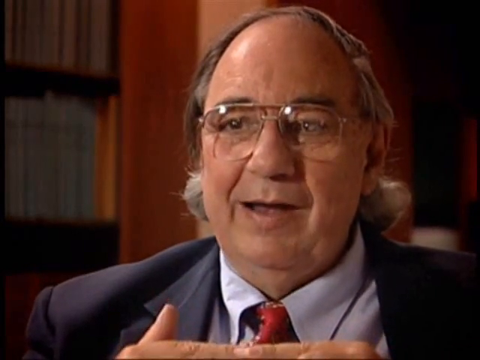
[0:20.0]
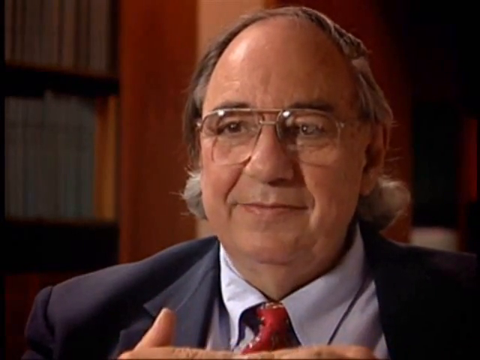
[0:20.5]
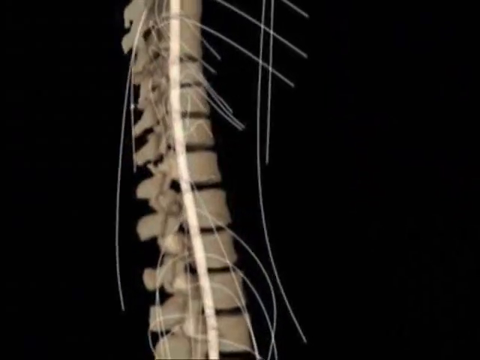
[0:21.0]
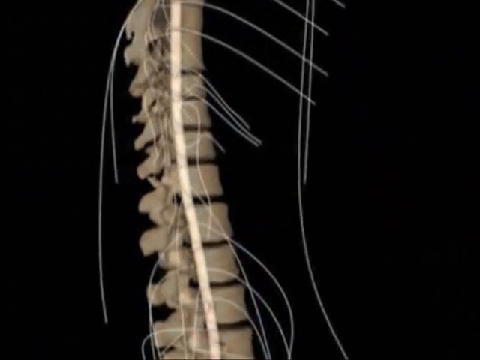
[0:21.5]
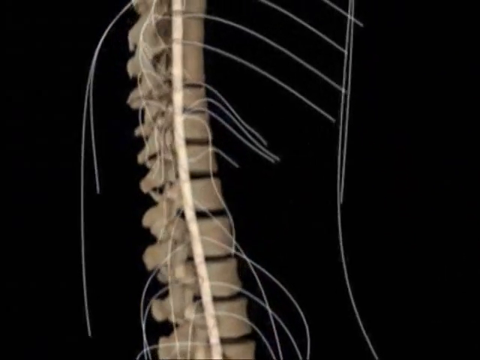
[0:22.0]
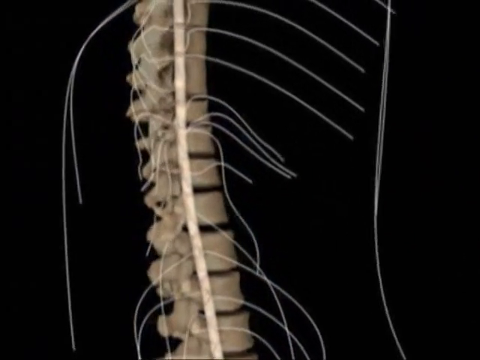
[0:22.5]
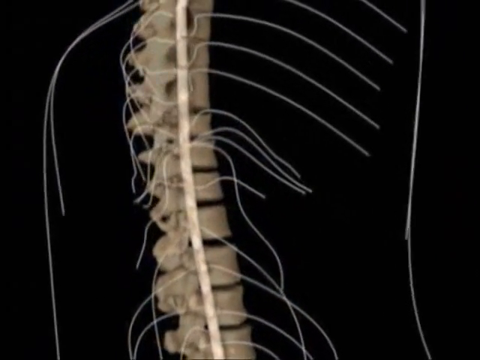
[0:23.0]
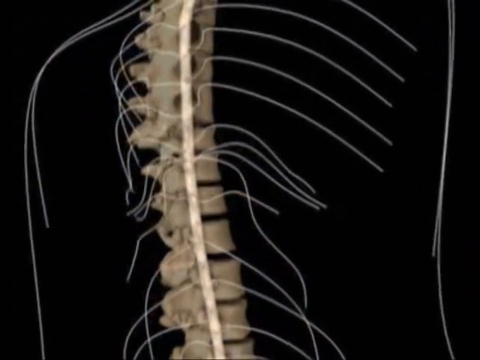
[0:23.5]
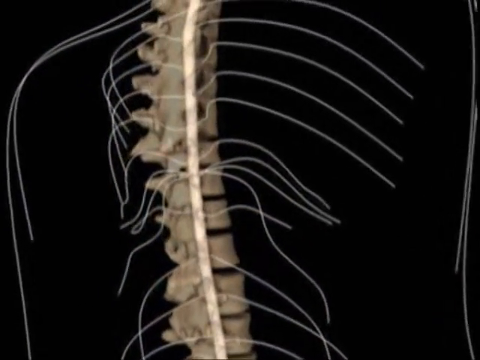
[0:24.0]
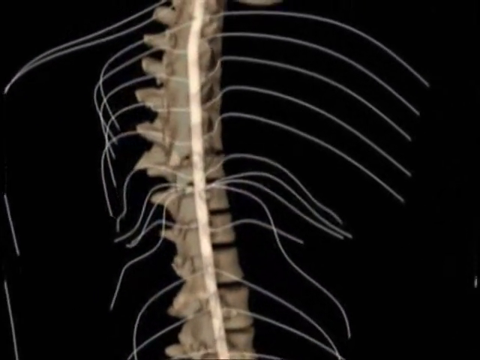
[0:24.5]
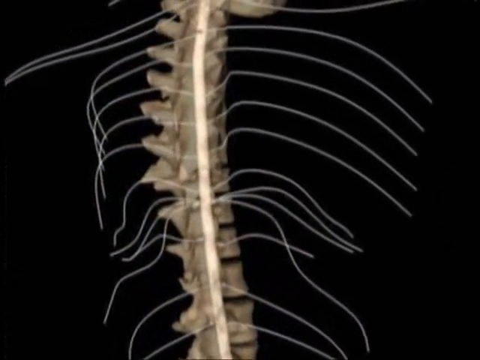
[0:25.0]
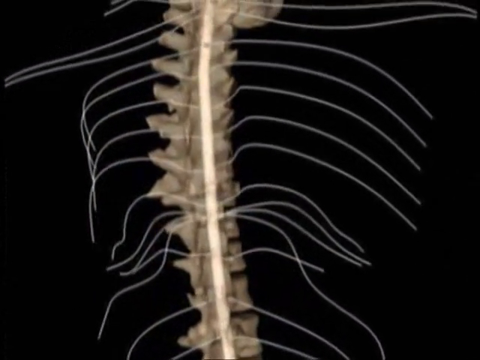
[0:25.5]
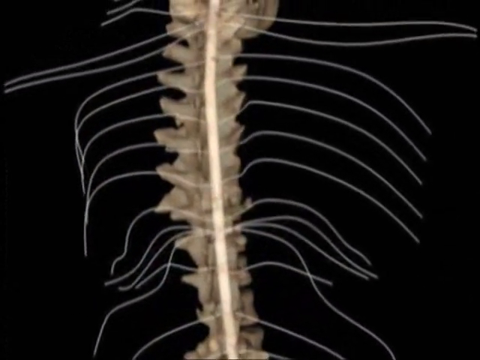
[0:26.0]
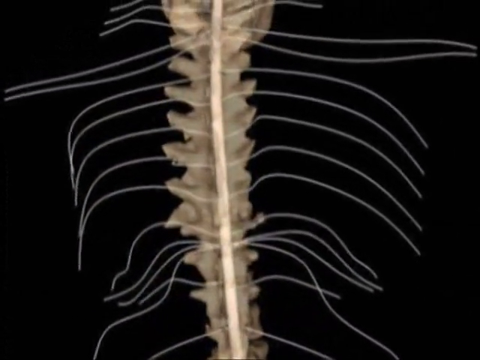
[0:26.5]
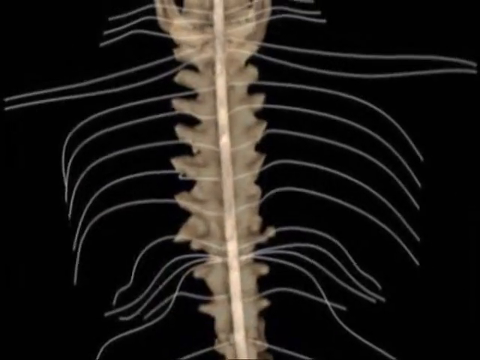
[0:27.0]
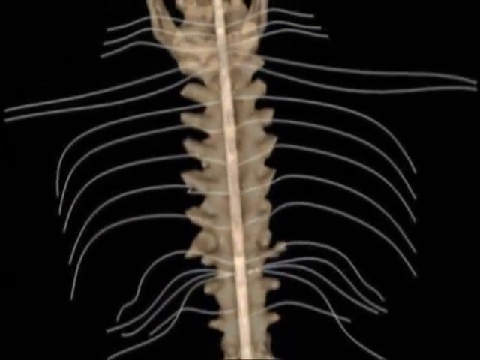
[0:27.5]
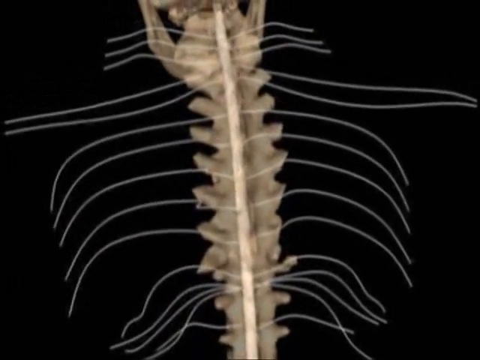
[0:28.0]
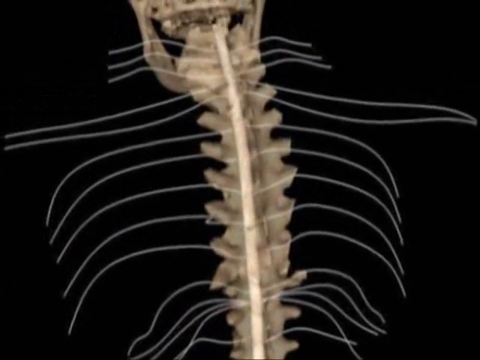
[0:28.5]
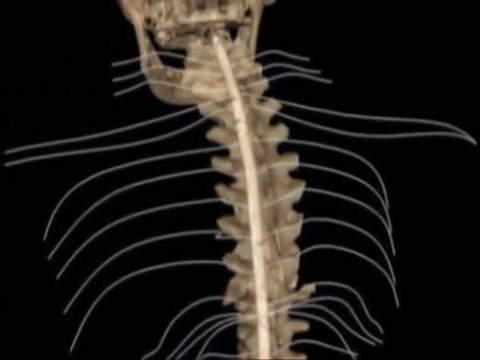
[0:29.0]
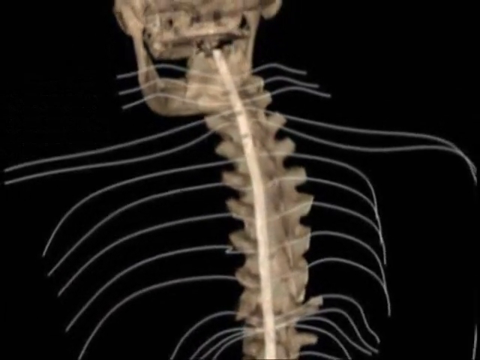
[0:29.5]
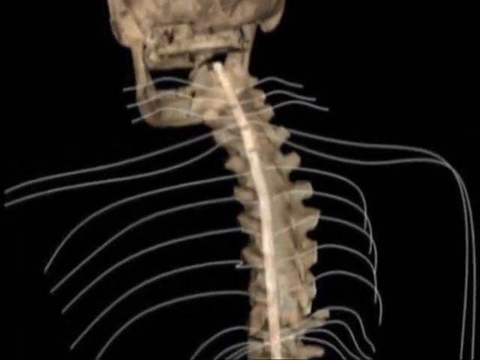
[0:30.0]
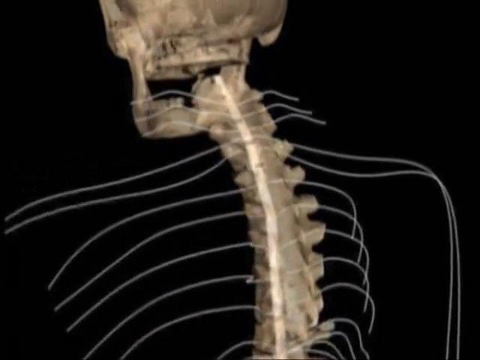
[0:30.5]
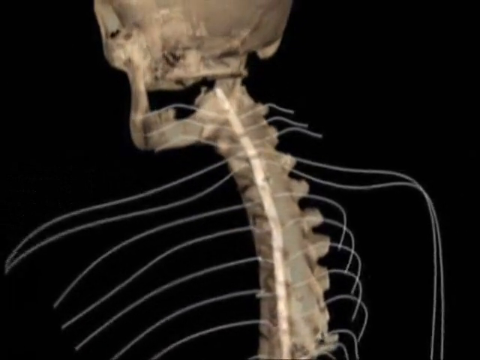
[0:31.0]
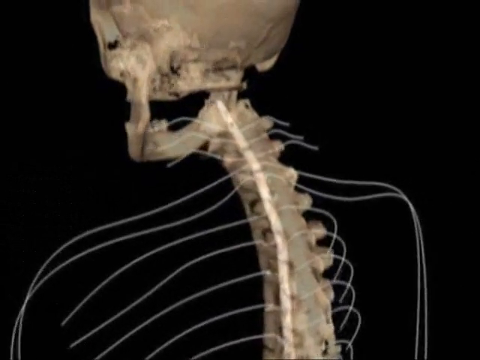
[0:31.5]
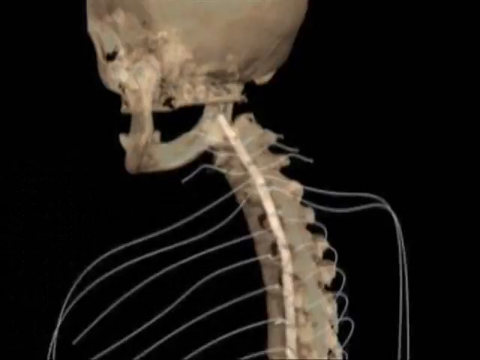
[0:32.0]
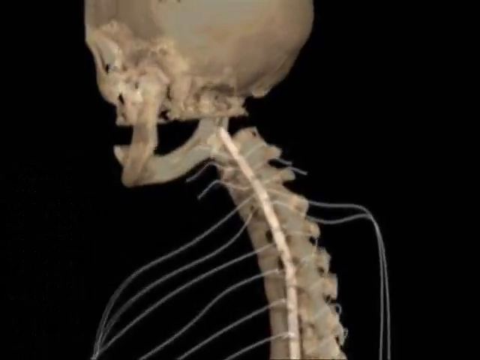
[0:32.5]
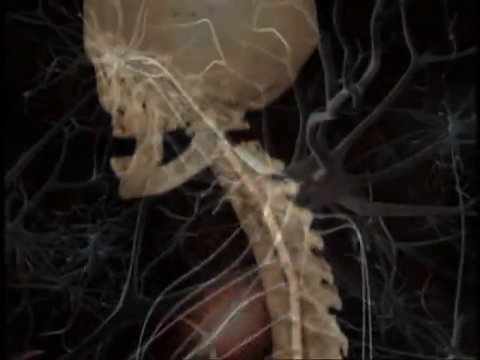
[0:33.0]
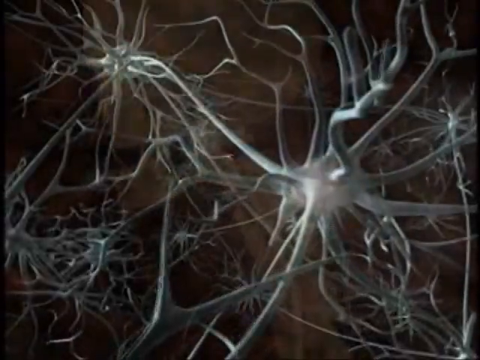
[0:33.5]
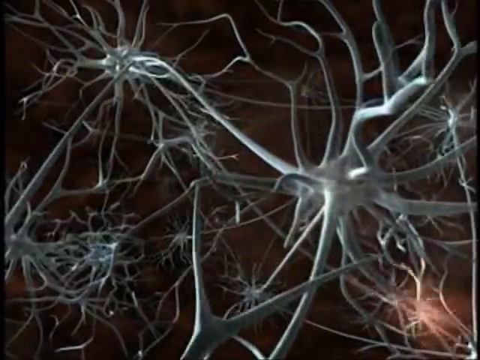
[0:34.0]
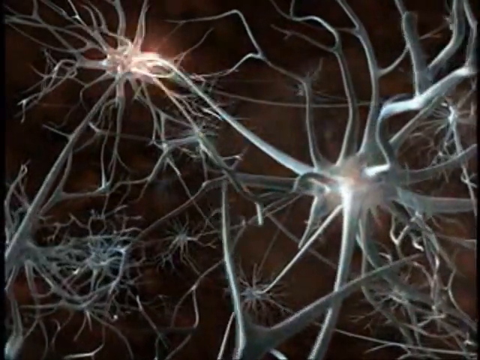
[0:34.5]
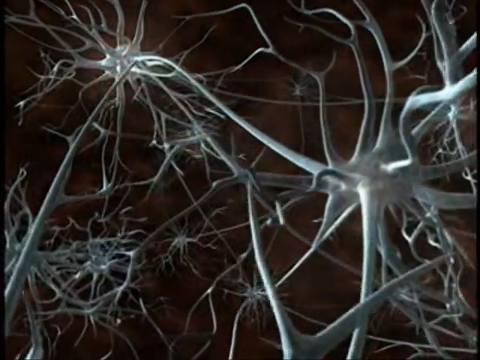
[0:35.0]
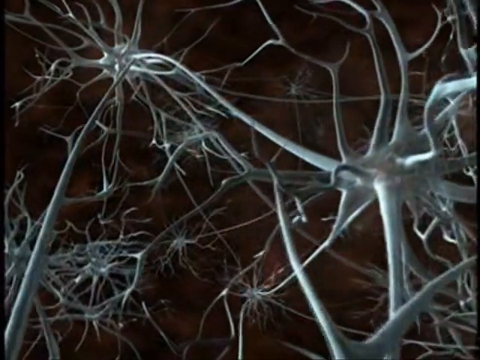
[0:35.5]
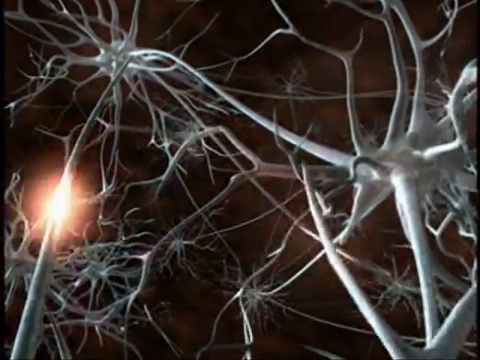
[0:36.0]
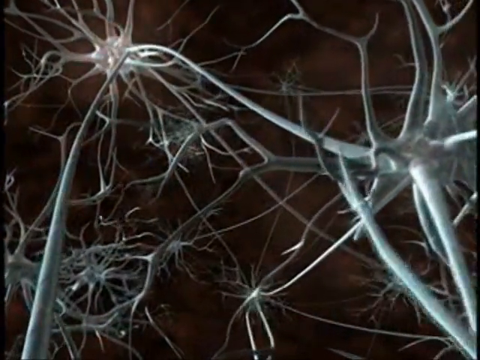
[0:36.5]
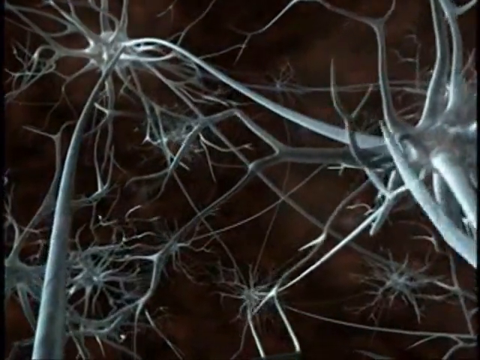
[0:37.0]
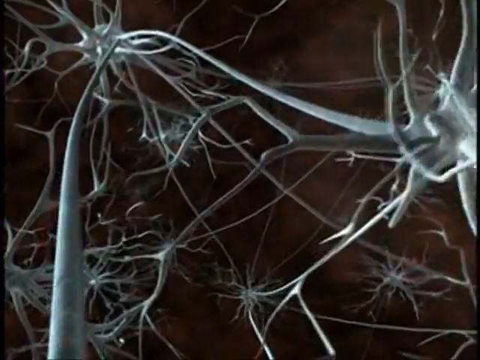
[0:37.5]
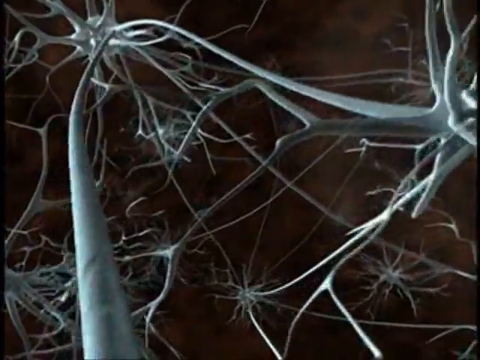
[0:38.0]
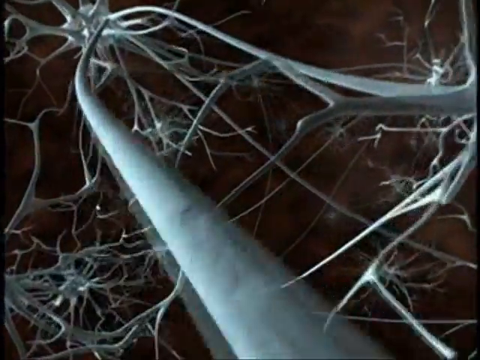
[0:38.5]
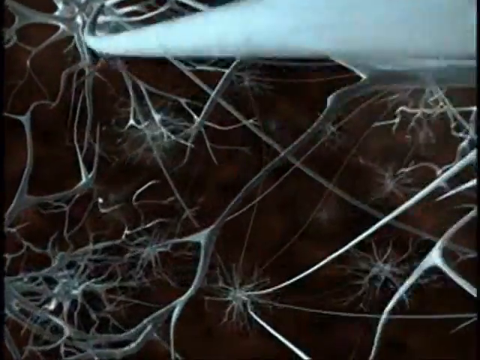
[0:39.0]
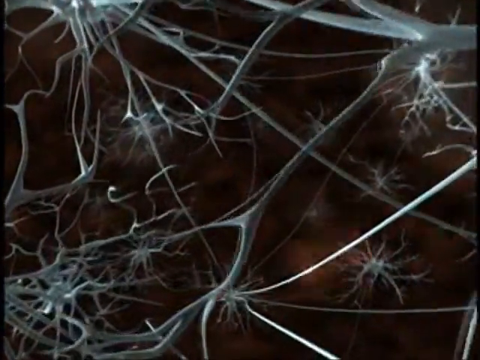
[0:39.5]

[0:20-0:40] A man speaks to the camera, looking slightly to the left. He has a receding hairline, gray hair that is longer in the back, and wire-rim glasses, and wears a dark gray suit jacket, a white shirt, and a red tie. Behind him, over his right shoulder, a library is vaguely visible. The scene switches to a 3D artist's rendering of the human spine, and the white spinal column appears inside it. The spine slowly rotates counterclockwise and the camera rises until the human skull attached to it comes into view. The camera then moves back to the drawing of the neurons: roundish white structures with many tentacles coming off them, connecting to one another against the black background. Electrical impulses travel along those arms into the center of each one. The camera then moves back to the man speaking to it, and he begins to gesture by raising his right hand.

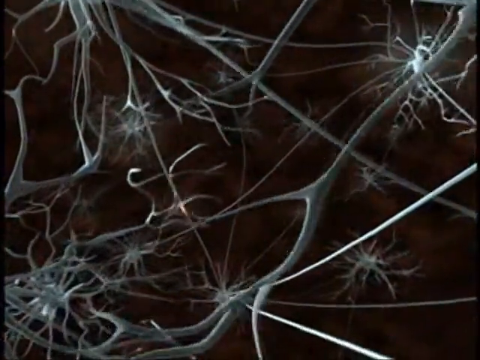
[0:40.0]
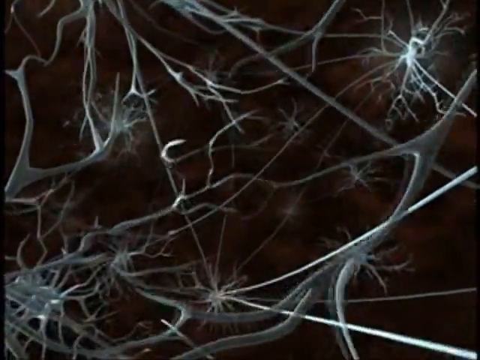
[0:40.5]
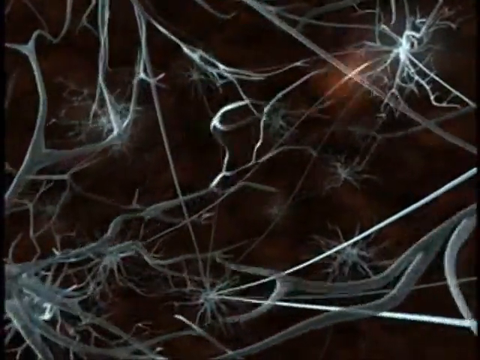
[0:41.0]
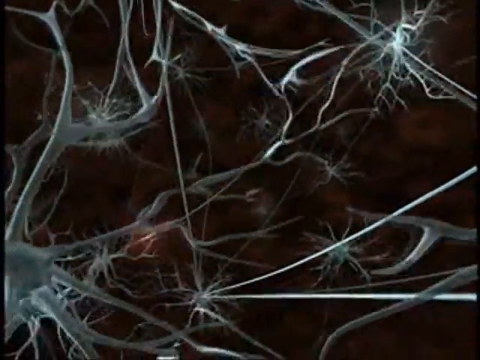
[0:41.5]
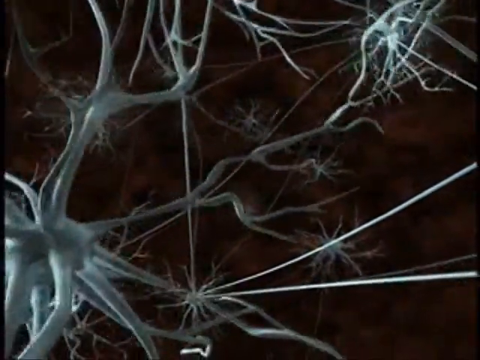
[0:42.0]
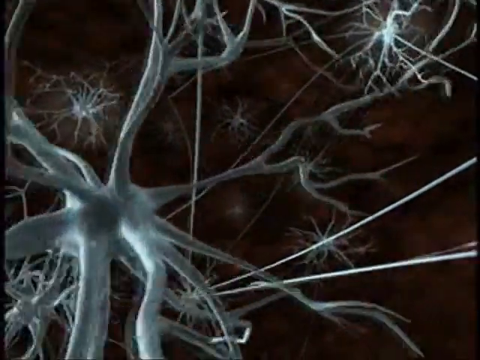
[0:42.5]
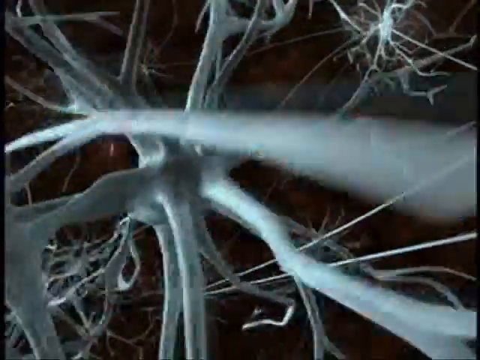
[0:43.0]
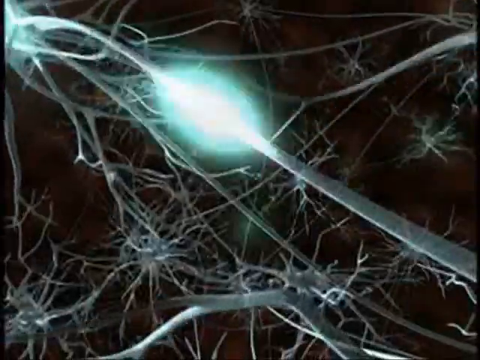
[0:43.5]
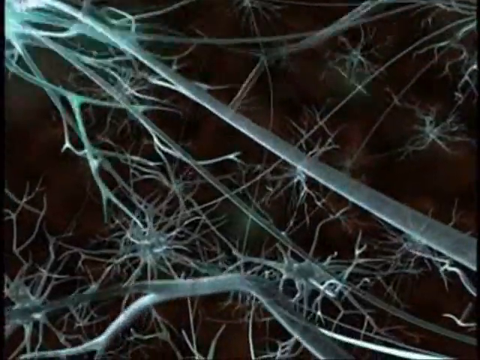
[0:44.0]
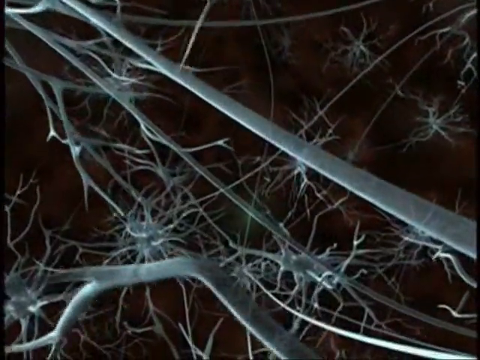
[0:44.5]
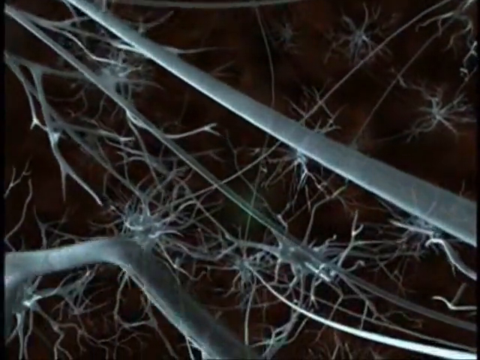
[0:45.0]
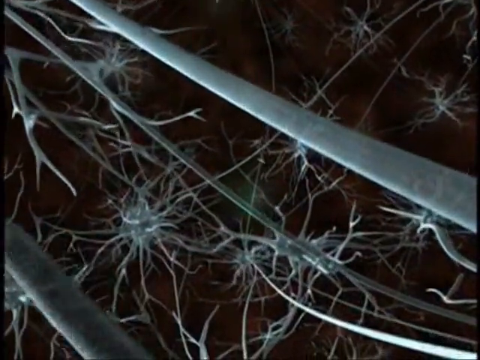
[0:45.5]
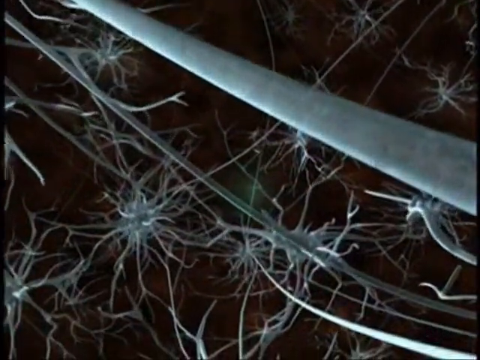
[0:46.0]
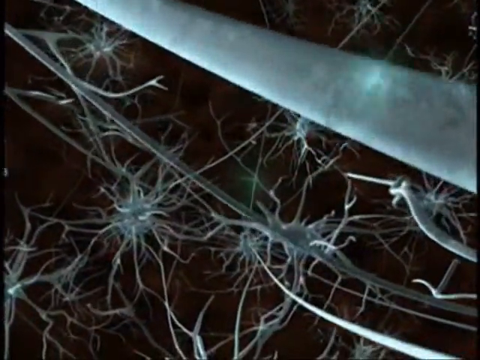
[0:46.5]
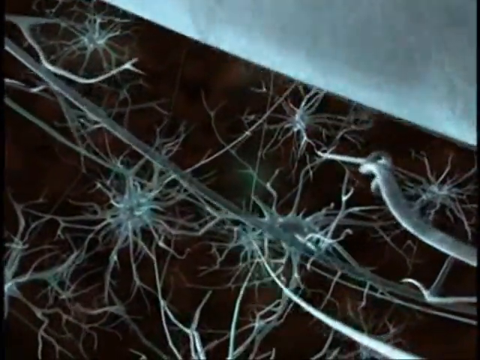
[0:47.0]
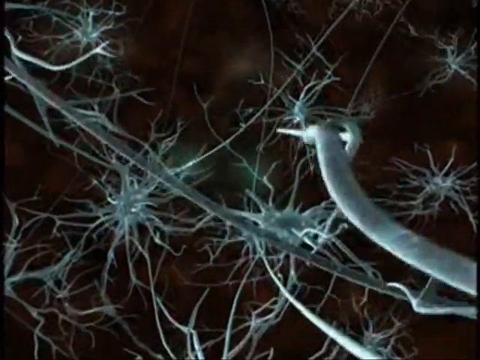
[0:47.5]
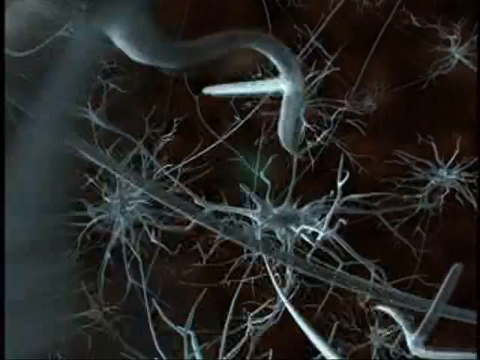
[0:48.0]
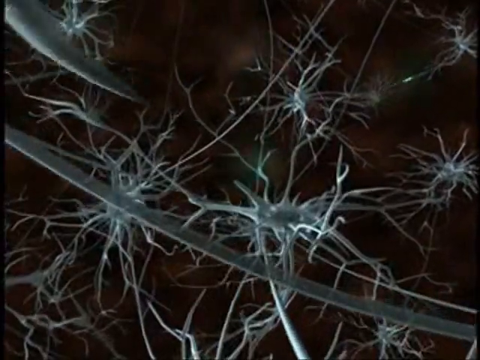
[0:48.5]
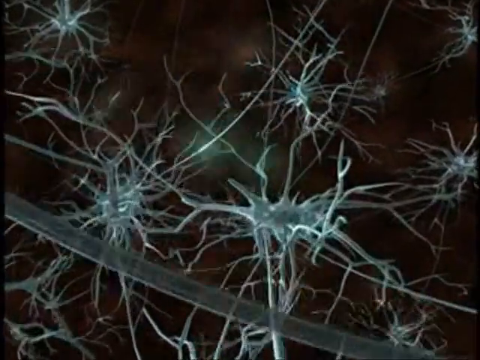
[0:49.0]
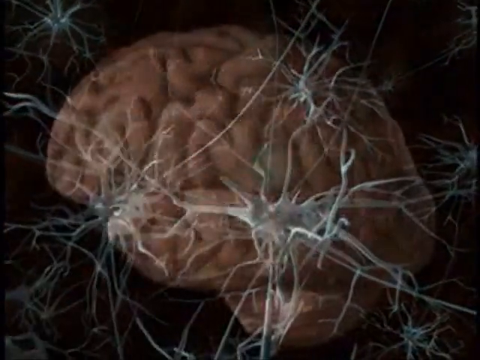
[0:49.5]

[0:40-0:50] An artist's rendering of a network shows roundish structures with many tentacles or arms coming off them, pictured against a black background. The camera pans around so that the structures seem to be stationary while the camera moves. One comes more closely into focus in front of the camera; it is largely white with some gray areas. Electrical impulses, illustrated by streaks of bright light, move along the arms of the neurons from center to center. The view briefly changes to a 3D image of a human brain rendered in pink, which moves laterally in a counterclockwise direction. Both lobes of the brain are clearly visible.